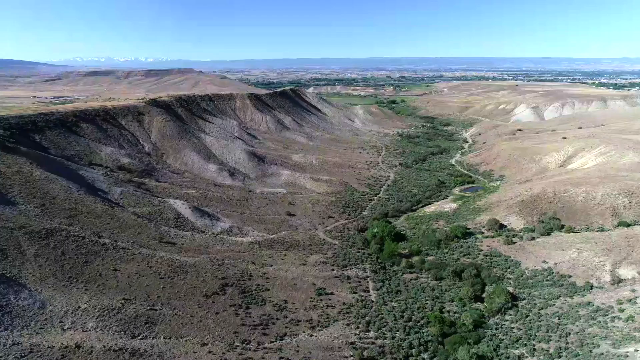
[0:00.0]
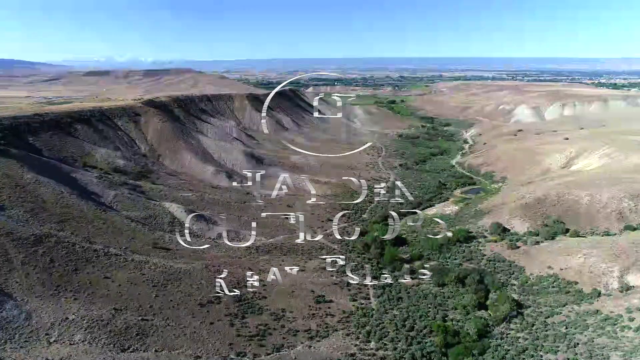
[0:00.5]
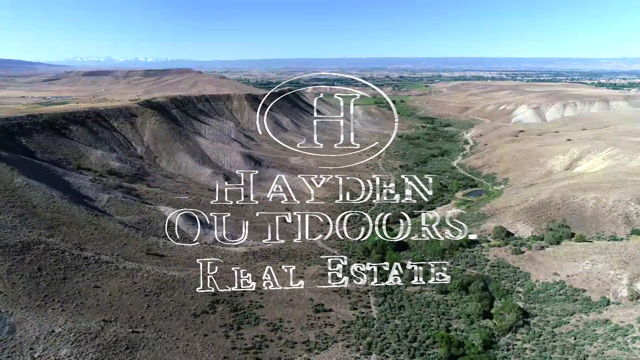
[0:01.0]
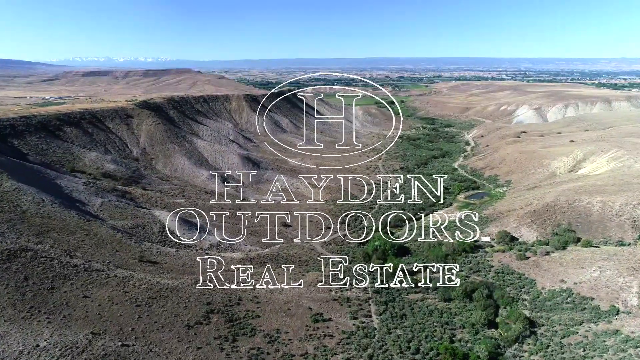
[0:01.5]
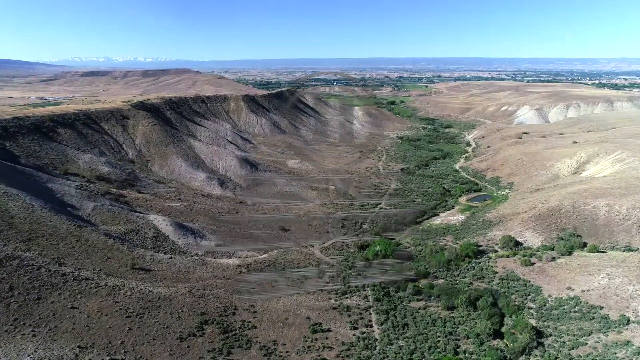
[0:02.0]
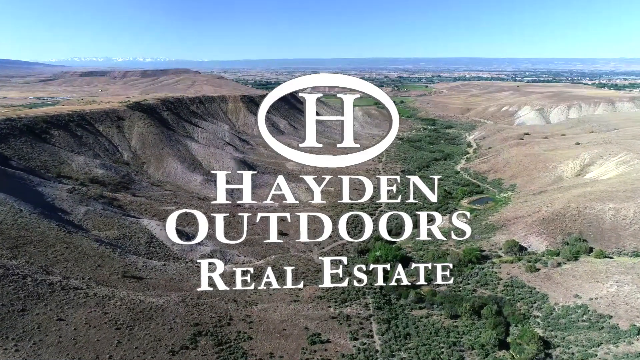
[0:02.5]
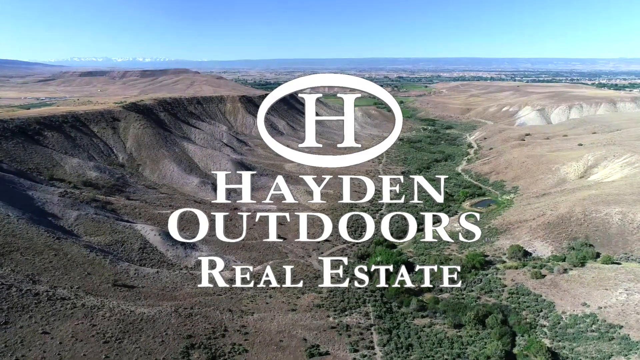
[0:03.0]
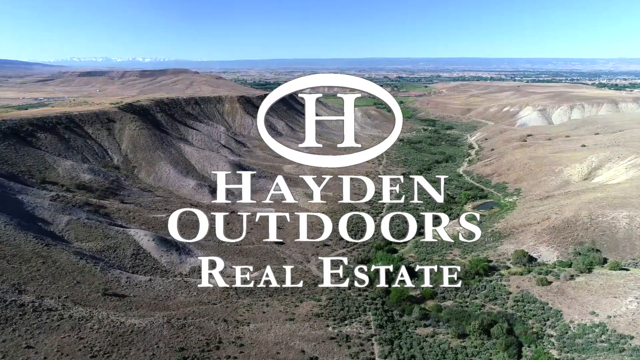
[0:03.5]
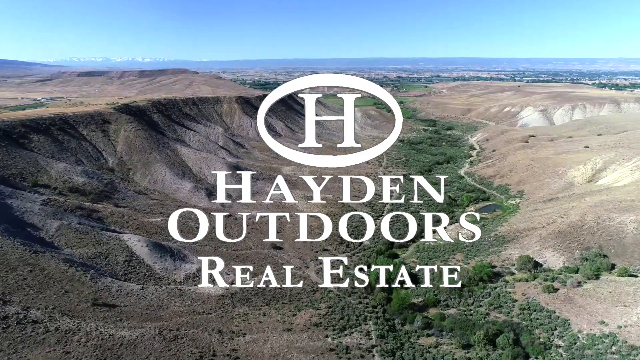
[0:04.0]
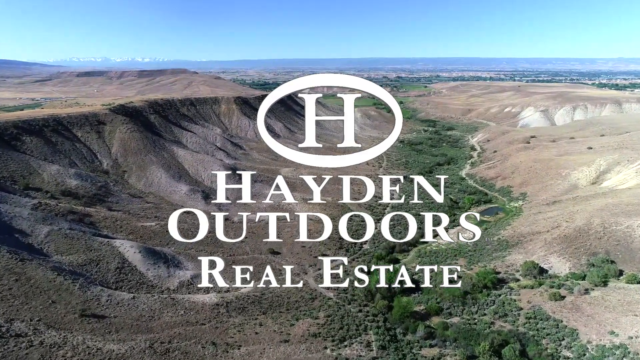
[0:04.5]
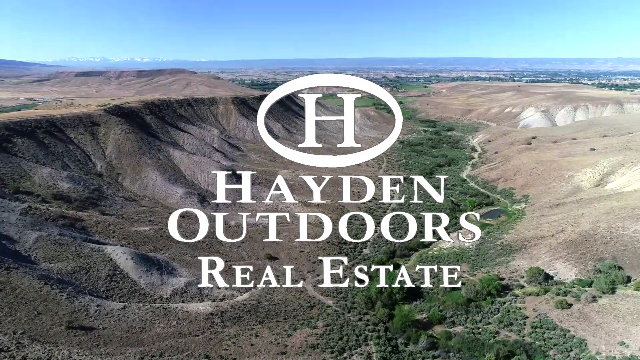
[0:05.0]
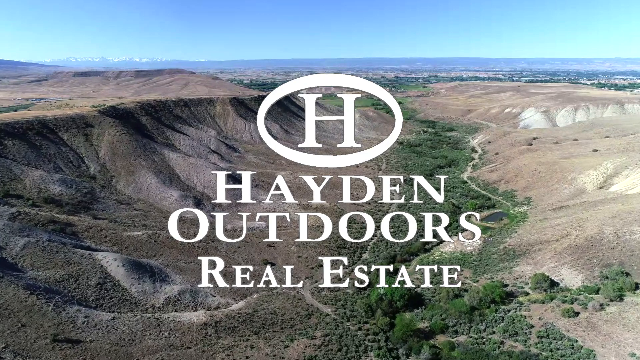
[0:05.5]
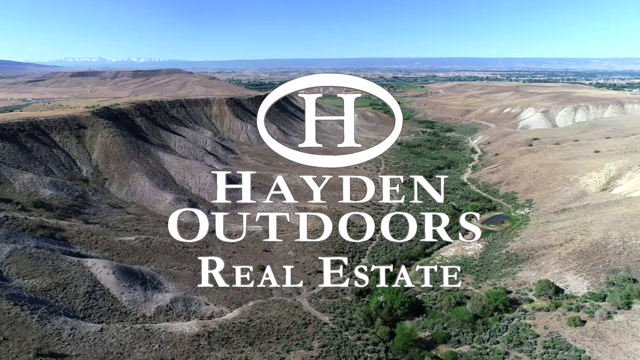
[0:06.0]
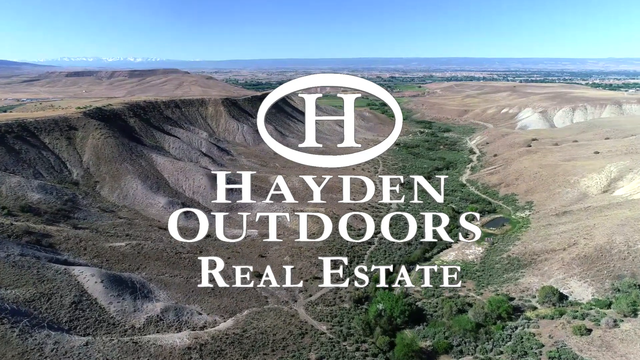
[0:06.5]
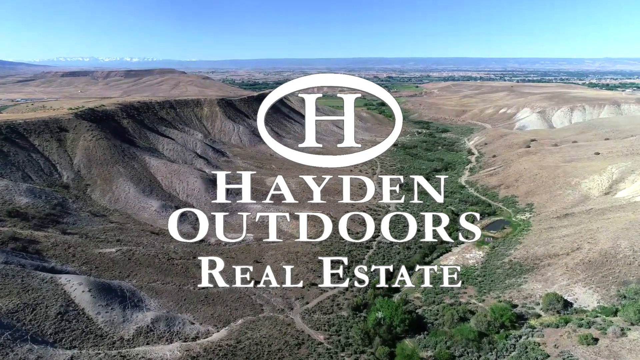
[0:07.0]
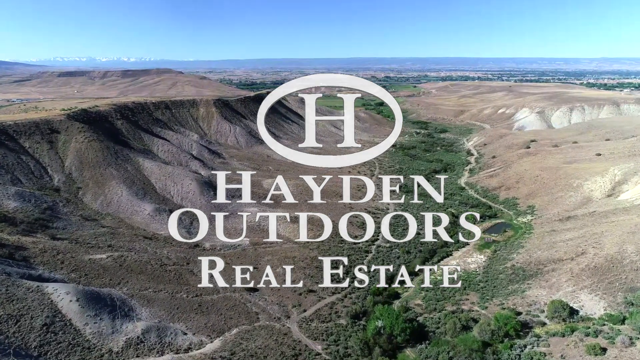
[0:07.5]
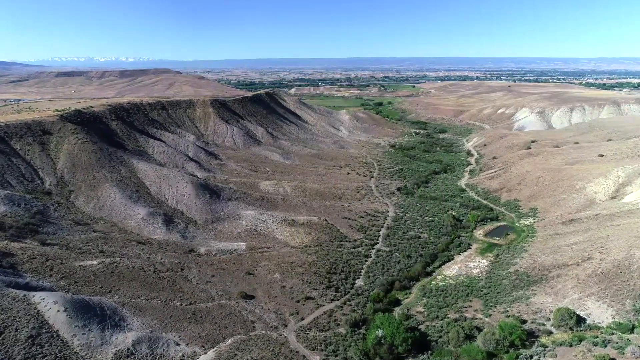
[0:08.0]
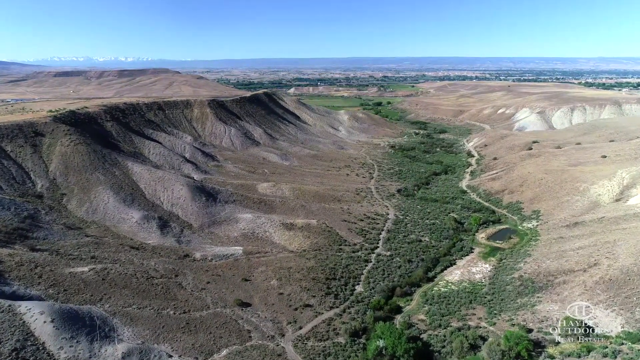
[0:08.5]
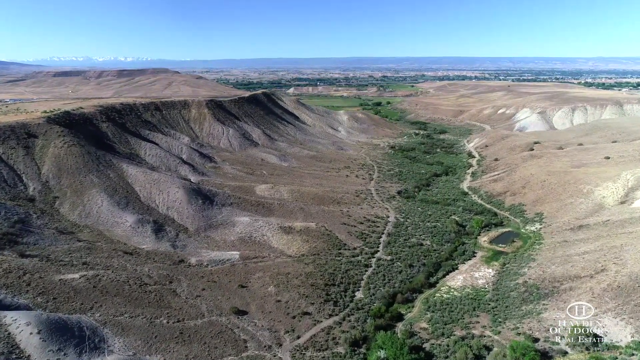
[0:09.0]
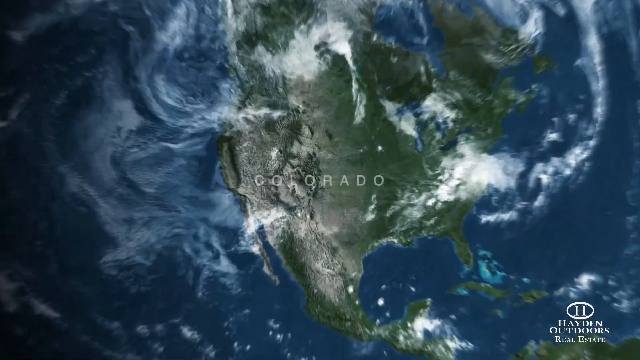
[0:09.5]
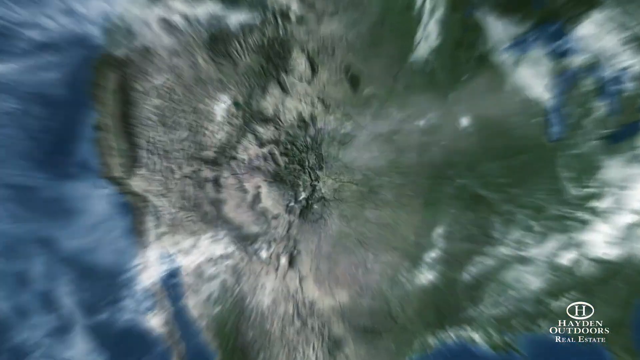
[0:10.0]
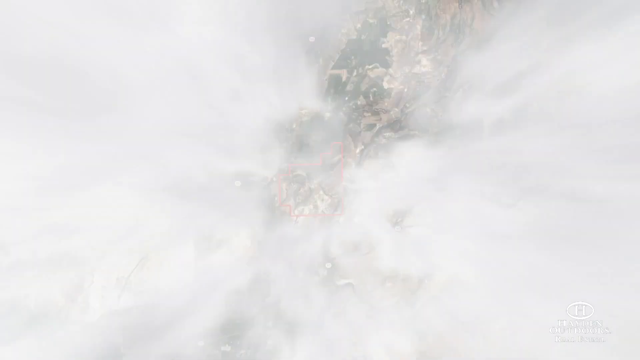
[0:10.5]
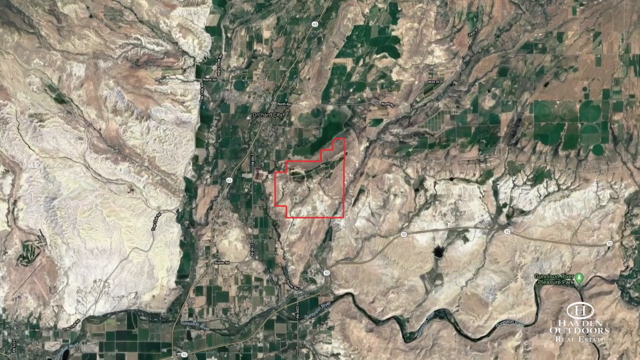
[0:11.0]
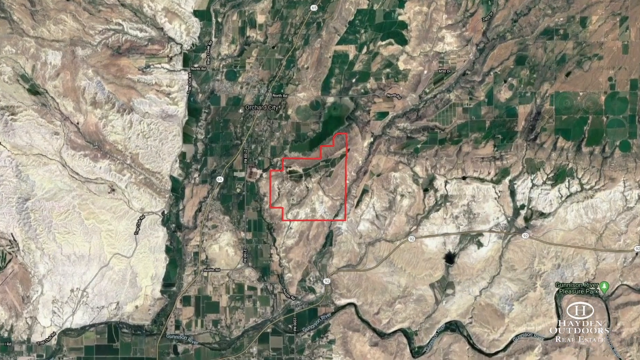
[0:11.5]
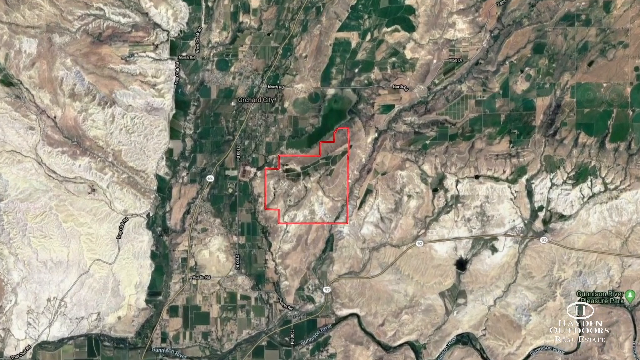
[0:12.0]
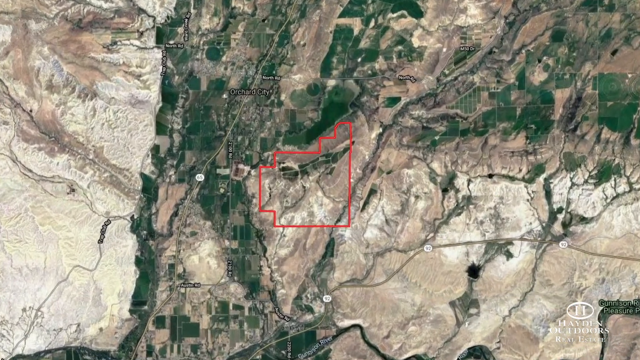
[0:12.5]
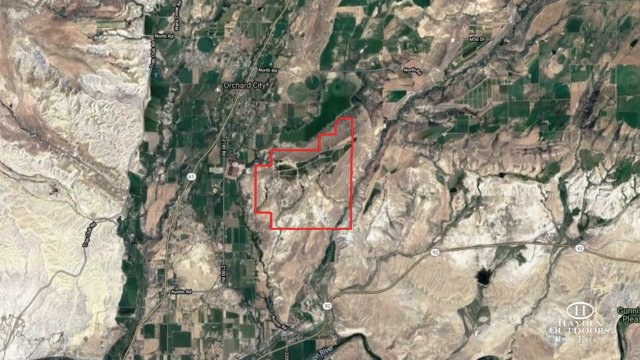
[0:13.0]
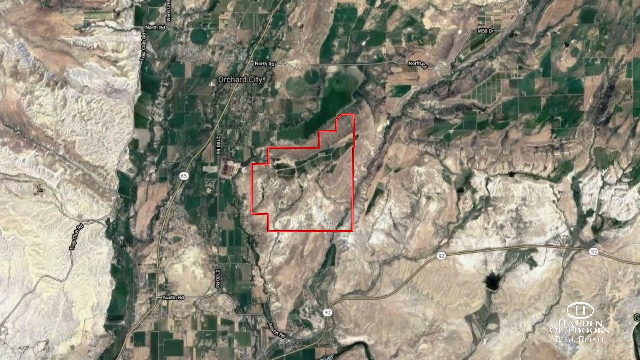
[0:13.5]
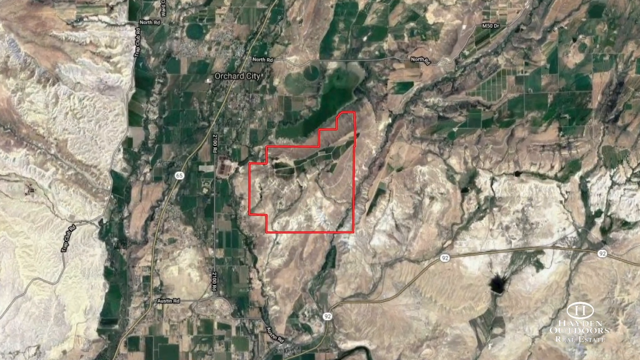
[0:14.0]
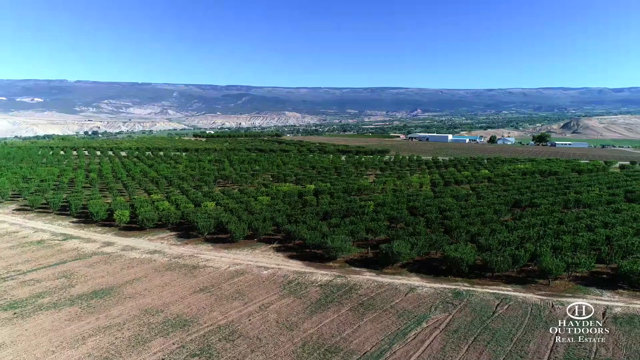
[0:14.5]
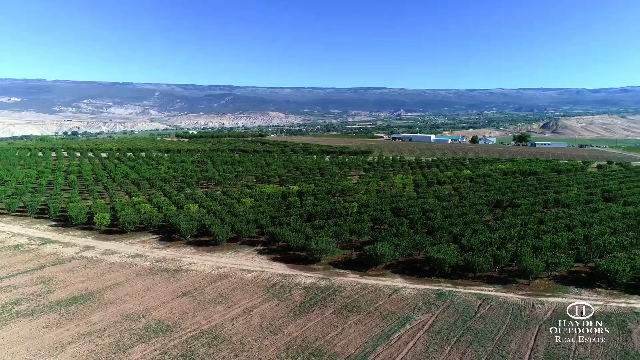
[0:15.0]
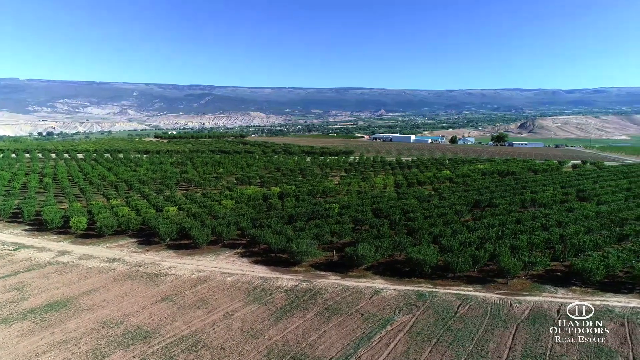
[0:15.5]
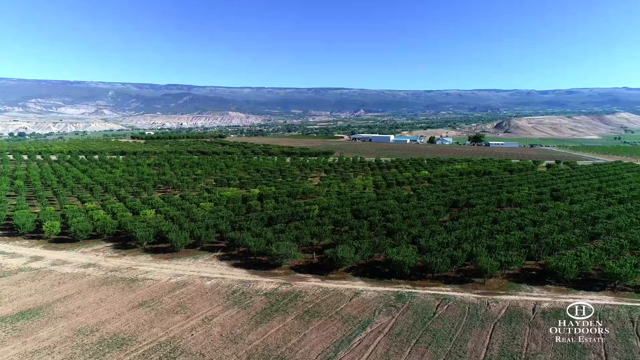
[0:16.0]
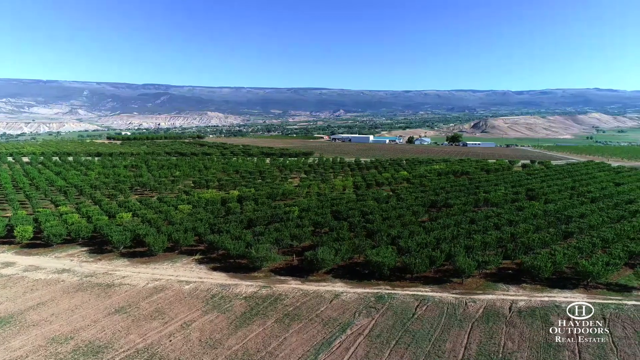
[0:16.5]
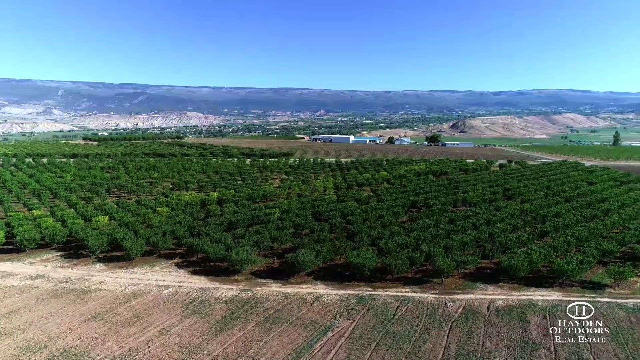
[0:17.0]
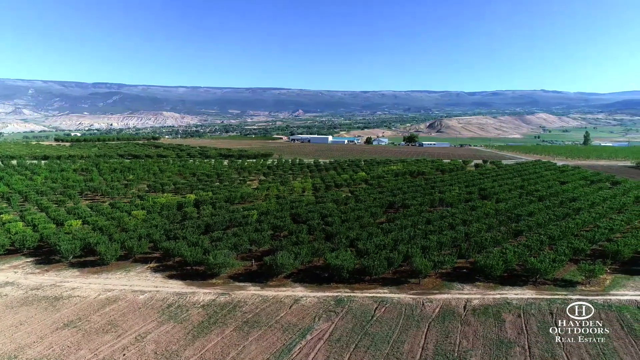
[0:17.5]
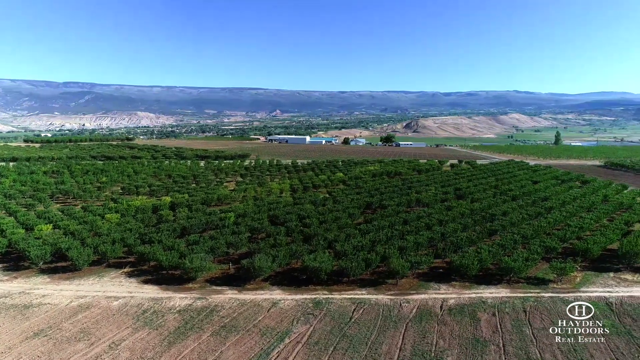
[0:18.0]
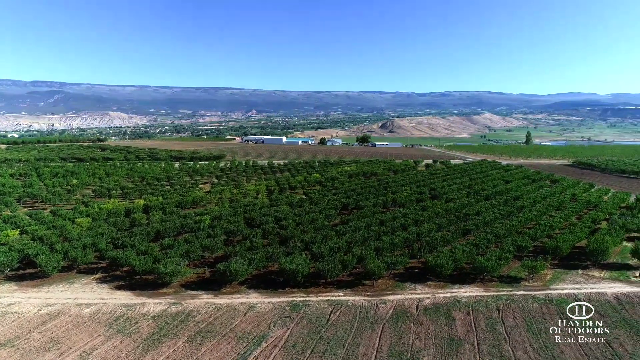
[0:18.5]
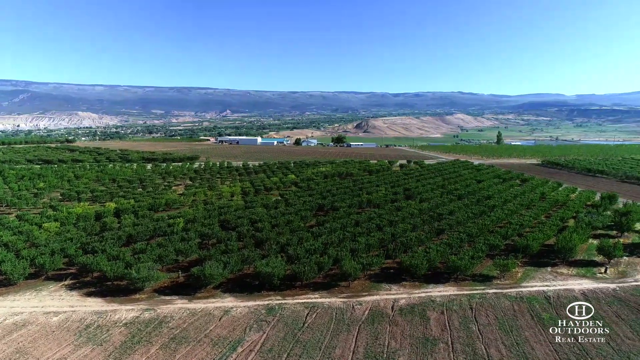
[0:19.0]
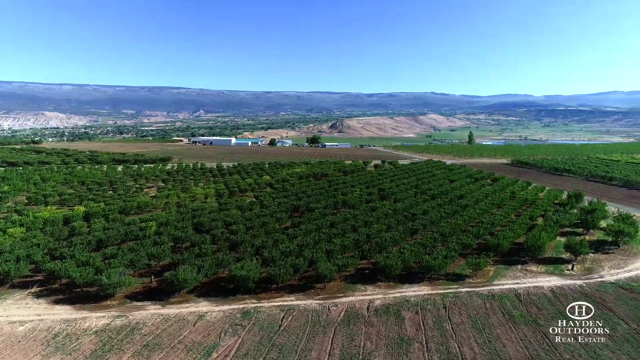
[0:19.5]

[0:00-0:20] An aerial shot opens on a very vast, open landscape with a few trees and a big hill or mountain on the left-hand side. It looks quite dry, with not much greenery apart from towards the centre of the screen. Text appears on the screen: an H in a logo, then "Hayden Outdoors Real Estate", suggesting this is apparently some kind of real estate advert. The text, at first just a white outline, flips in an animation and turns white. A graphic then zooms in from space into Colorado, New Mexico, with a red outline on the state on the map. The video cuts to what appears to be farmland, with small trees on a plantation, some kind of low-lying hills and a farm in the background. The grass looks quite dry and brown, and there is a brown dirt road in front of it, but the trees seem to be the main focus of this shot. The sky is very blue; this is another aerial shot.